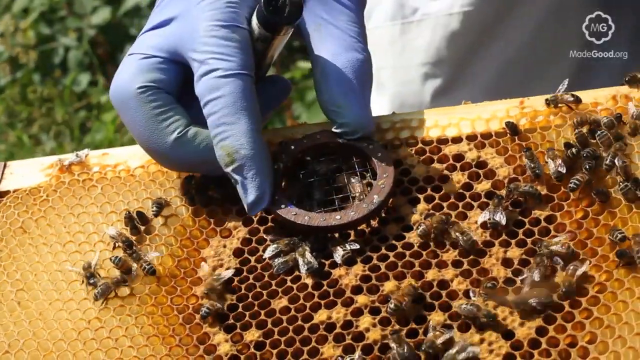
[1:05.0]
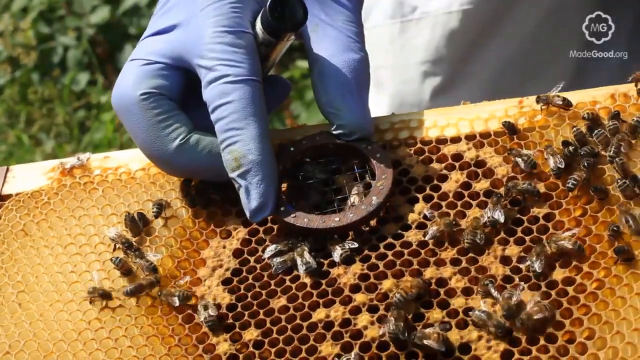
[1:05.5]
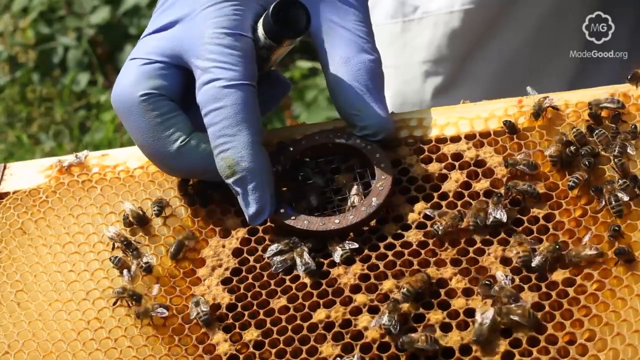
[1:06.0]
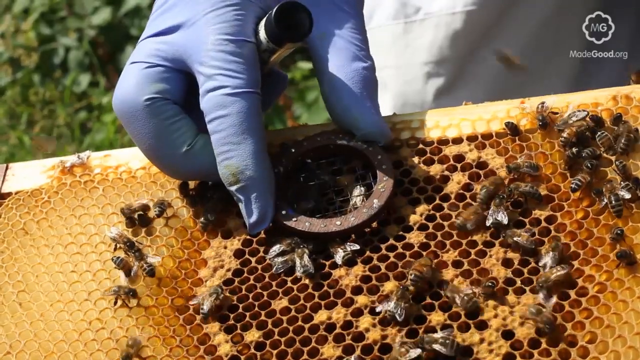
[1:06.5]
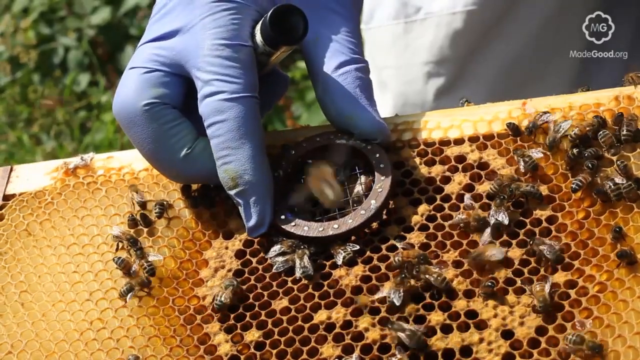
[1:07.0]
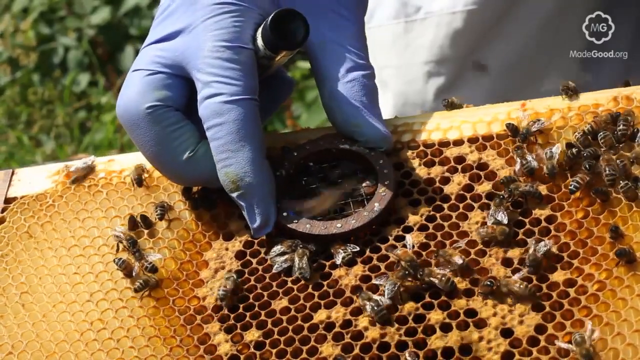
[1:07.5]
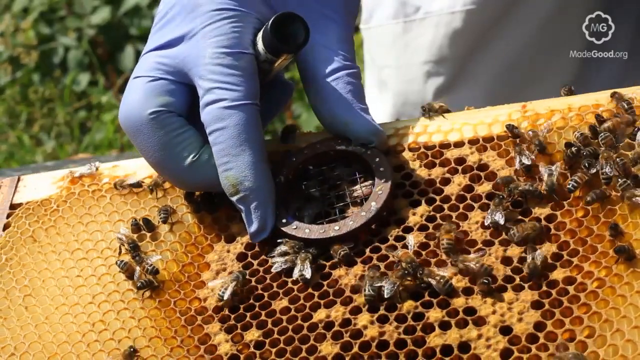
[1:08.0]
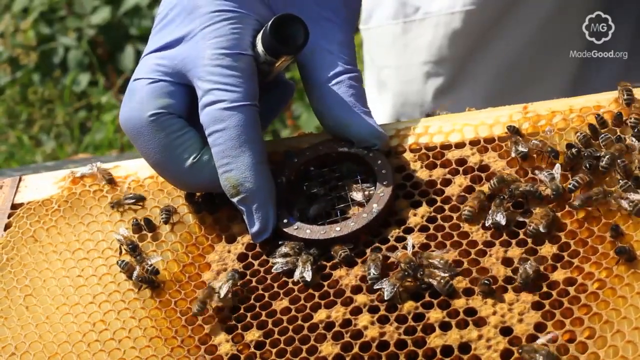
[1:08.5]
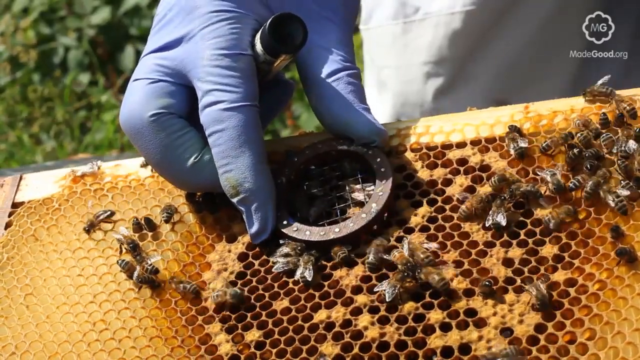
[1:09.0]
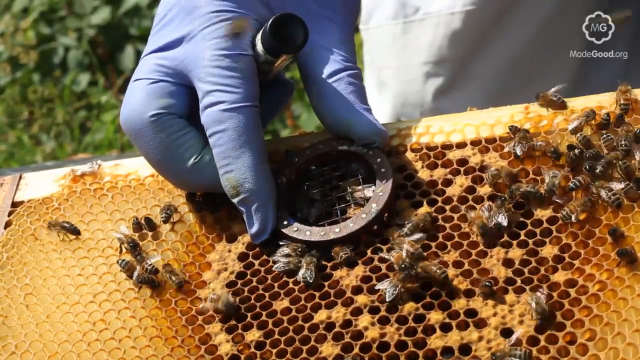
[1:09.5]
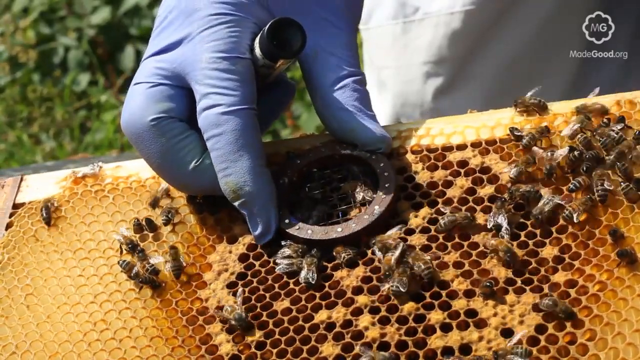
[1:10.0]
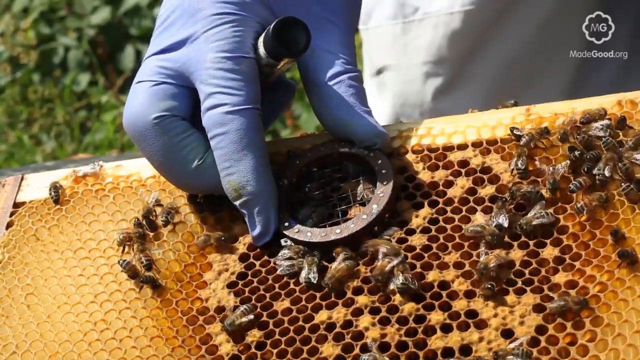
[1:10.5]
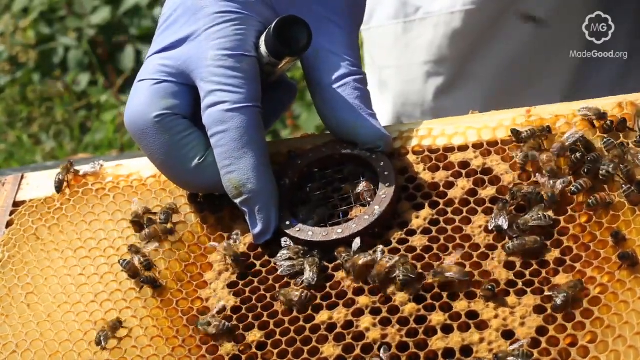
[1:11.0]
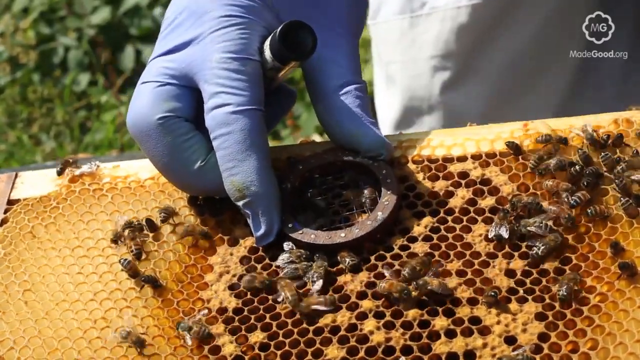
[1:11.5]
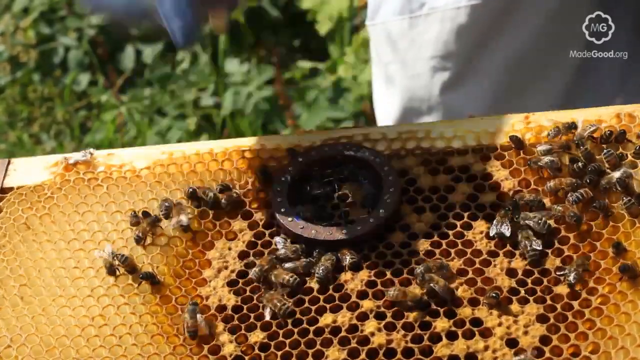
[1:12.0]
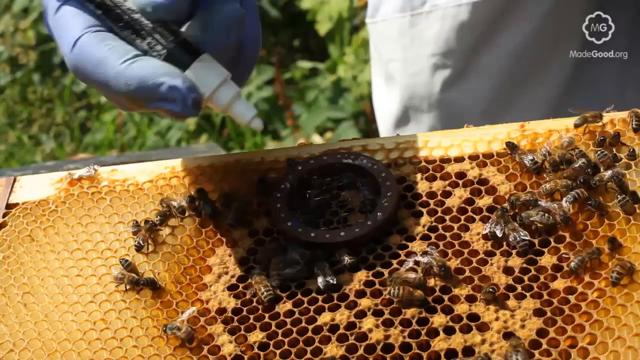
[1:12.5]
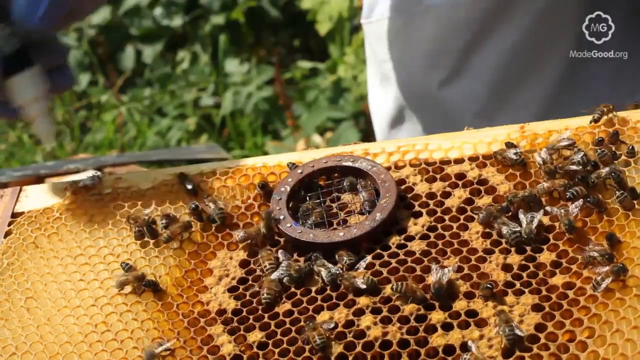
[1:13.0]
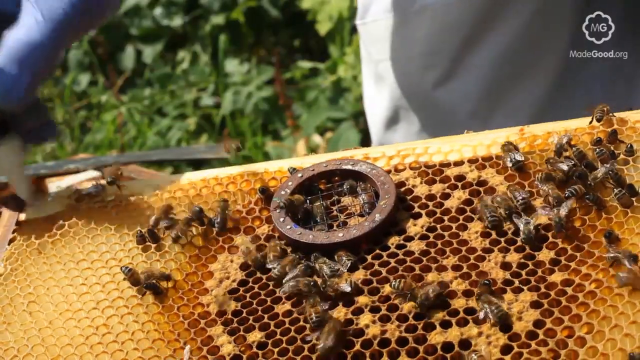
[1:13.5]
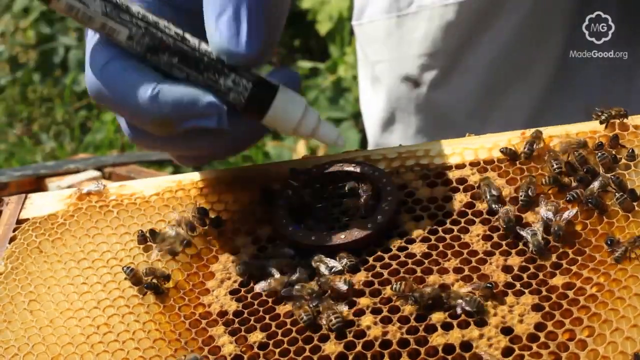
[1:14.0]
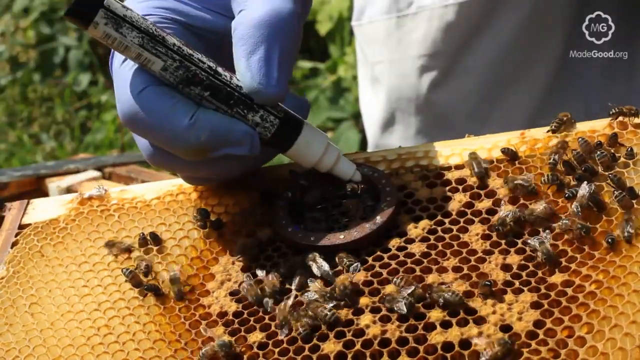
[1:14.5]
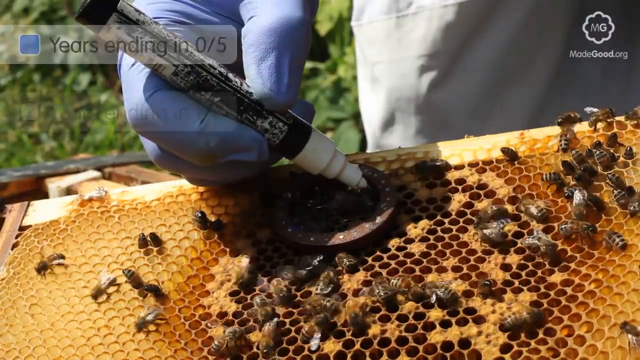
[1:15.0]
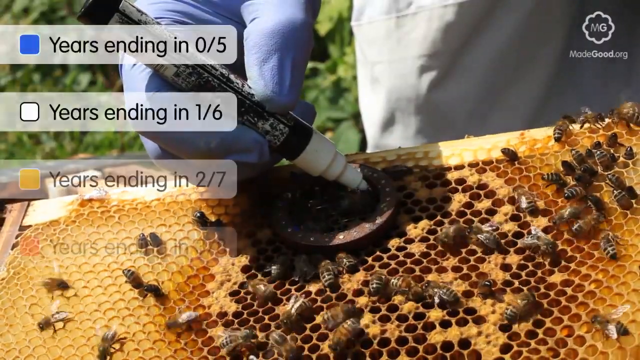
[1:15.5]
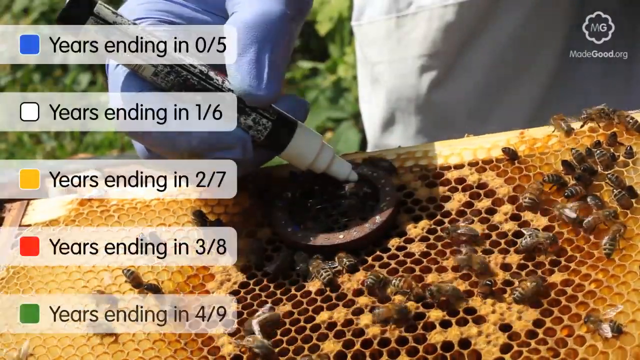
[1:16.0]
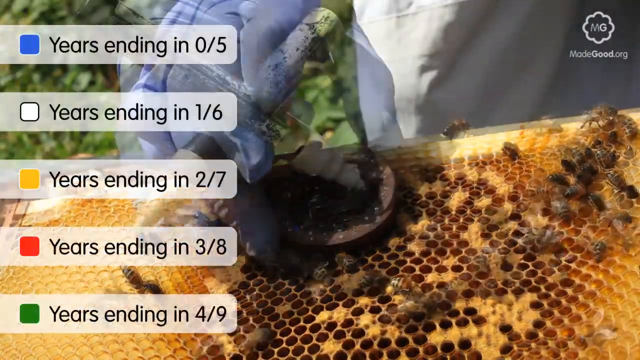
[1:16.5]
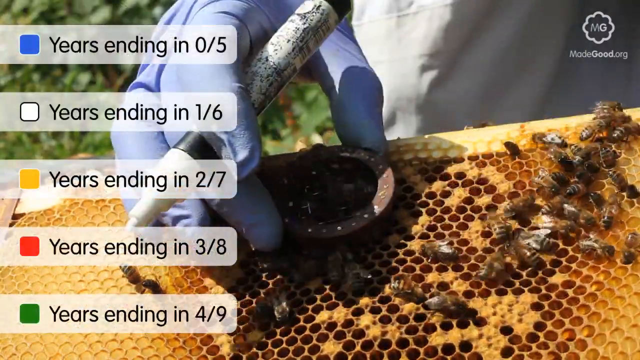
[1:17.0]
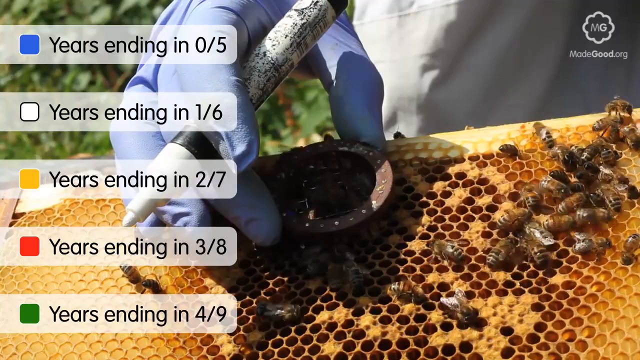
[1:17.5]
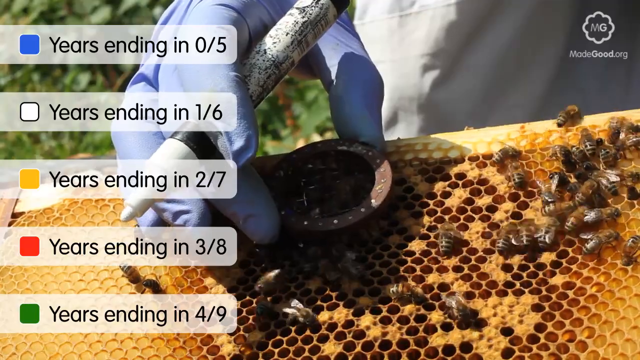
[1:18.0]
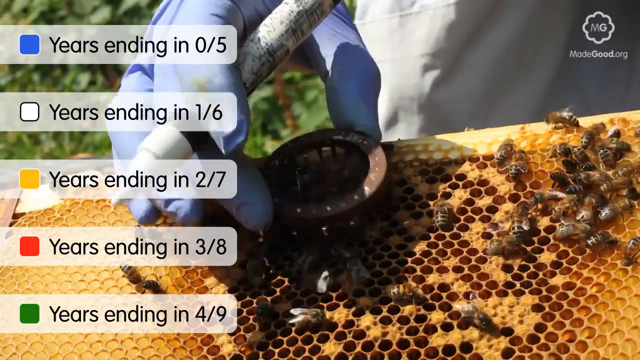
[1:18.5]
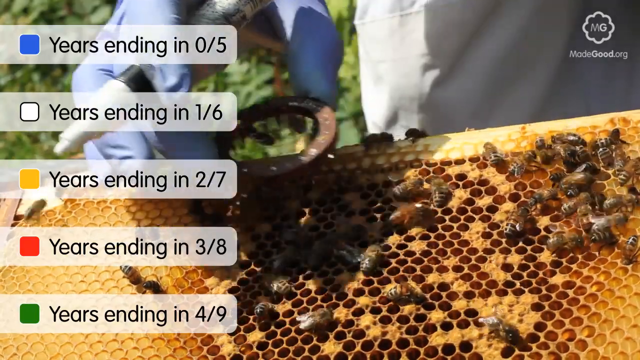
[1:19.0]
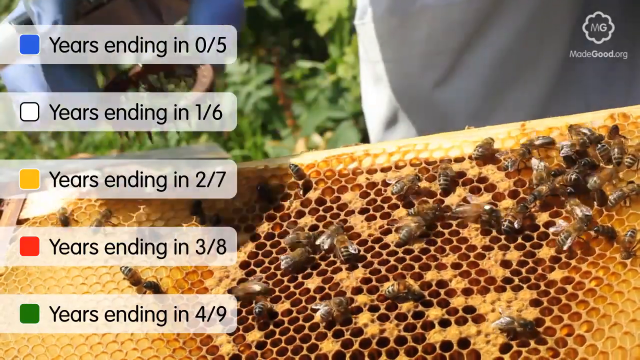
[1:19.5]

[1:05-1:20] A person wearing a purple glove adjusts a small circular object on part of the device where many bees are swarming and crawling. They keep lifting it slightly and eventually push it down, apparently to make sure it is closed, and a few bees are captured underneath. They then bring in a large device that almost looks like a pen, with a white top and a black and white lower part, and appear to be putting something inside the circular object containing the bees. On screen, years are listed with colors: a white box with "years ending in 1-6", yellow with "years ending in 2-7", orange with "years ending in 3-8", and green with "years ending in 4-9". At the end, the person lifts the circular center off to the side, apparently putting it away, and it contains some bees.